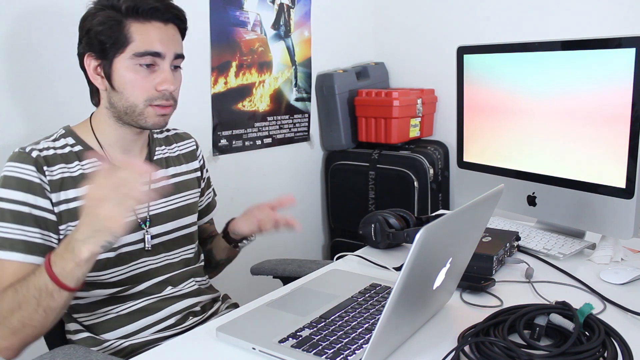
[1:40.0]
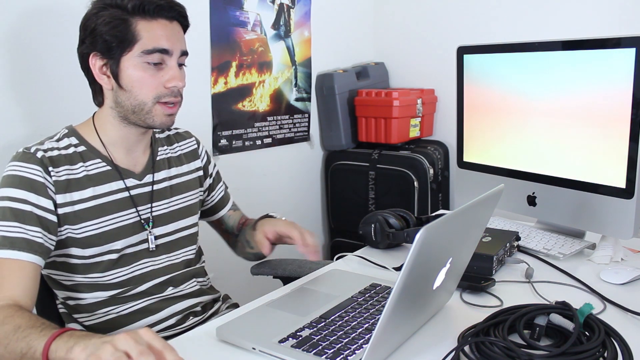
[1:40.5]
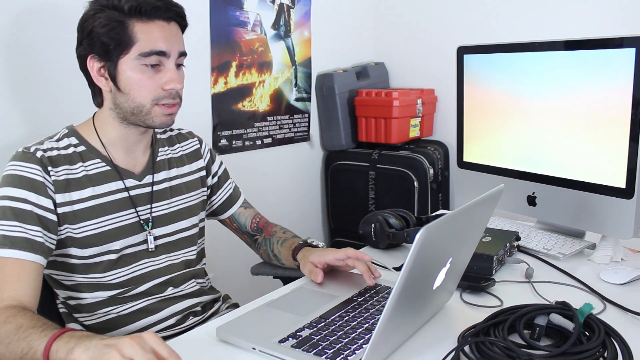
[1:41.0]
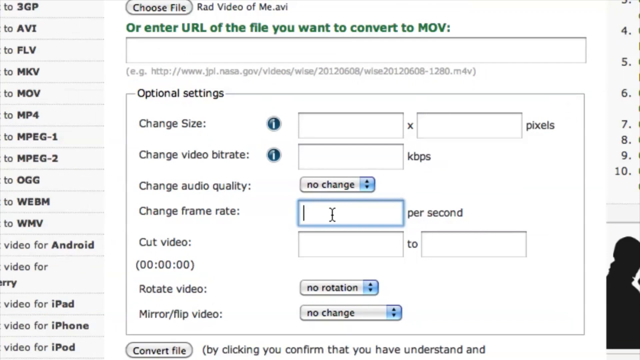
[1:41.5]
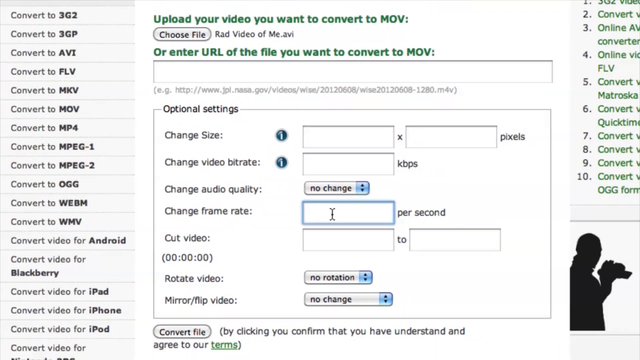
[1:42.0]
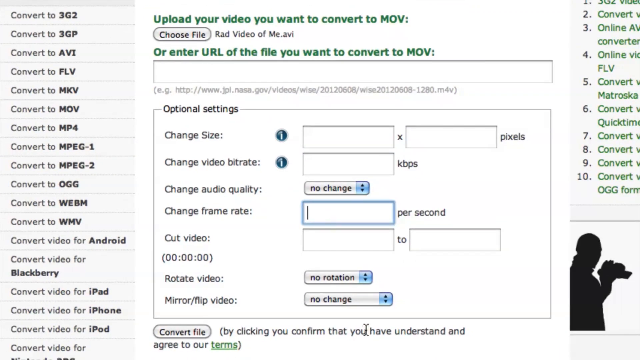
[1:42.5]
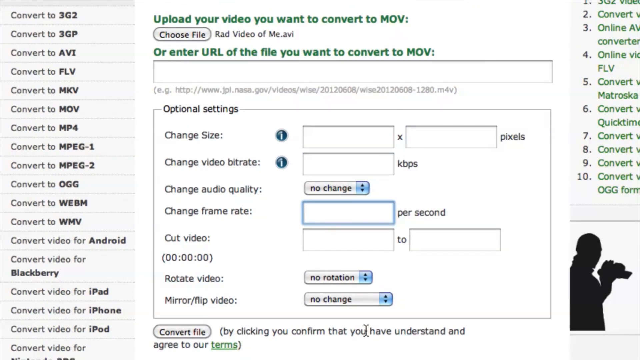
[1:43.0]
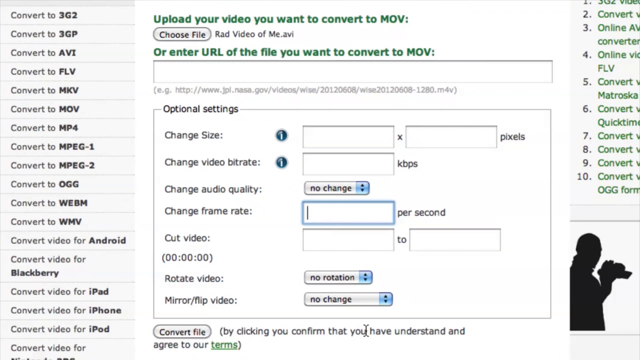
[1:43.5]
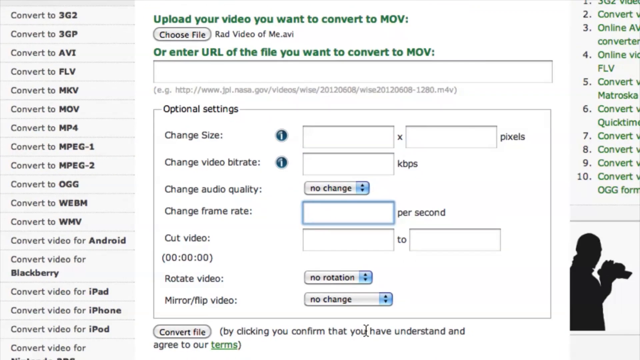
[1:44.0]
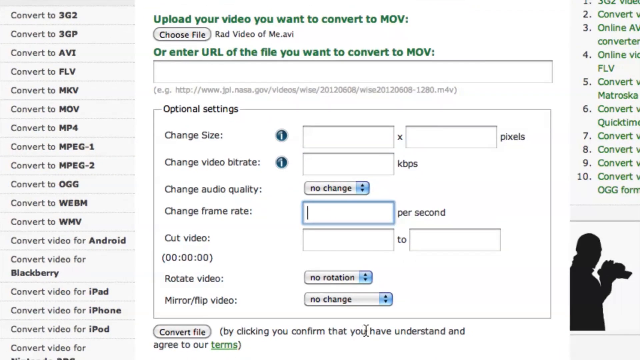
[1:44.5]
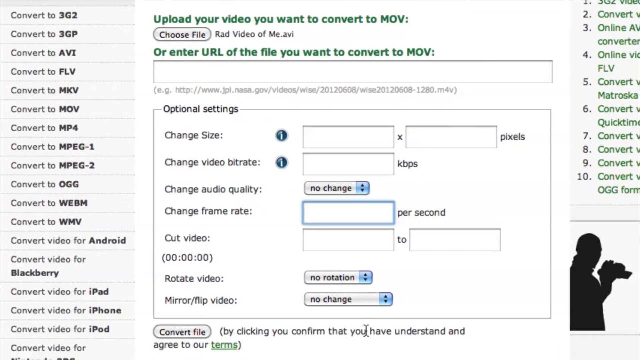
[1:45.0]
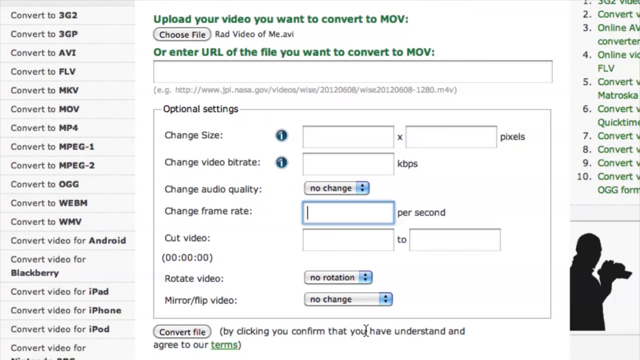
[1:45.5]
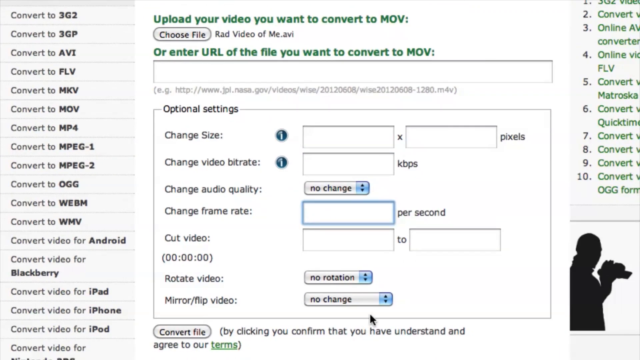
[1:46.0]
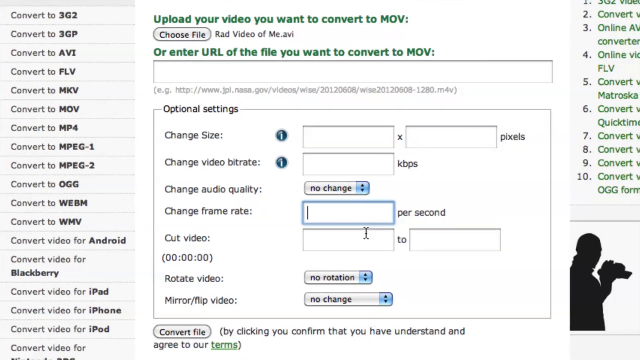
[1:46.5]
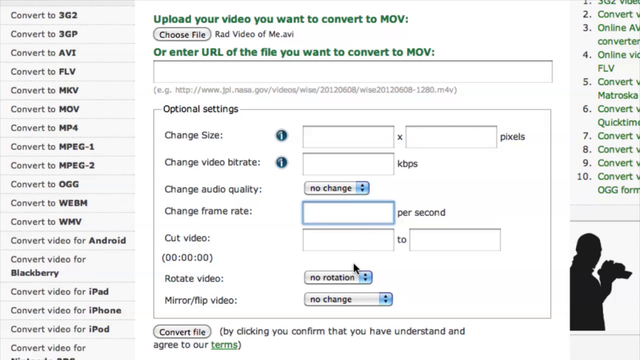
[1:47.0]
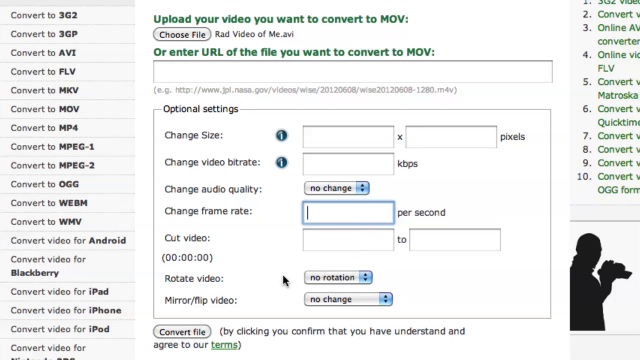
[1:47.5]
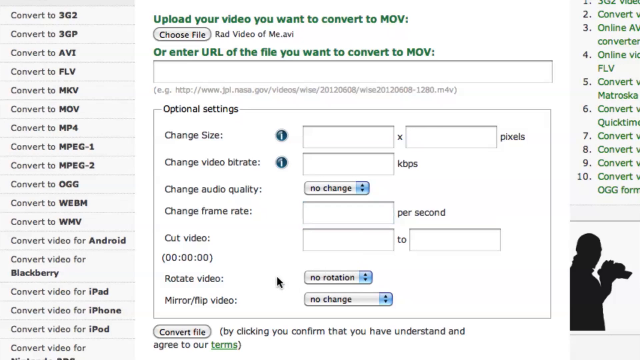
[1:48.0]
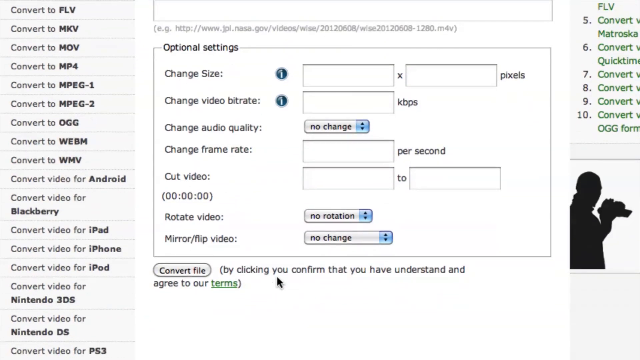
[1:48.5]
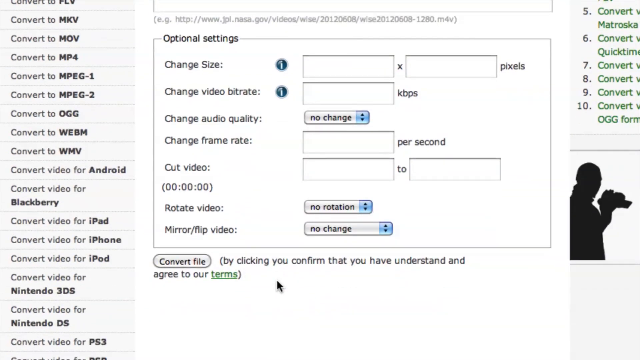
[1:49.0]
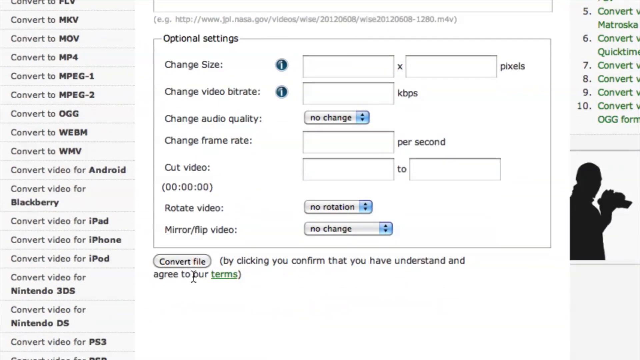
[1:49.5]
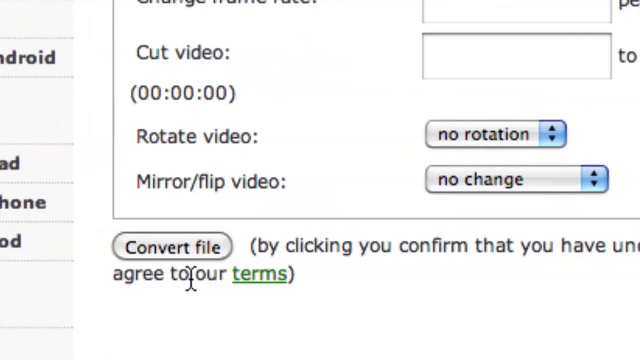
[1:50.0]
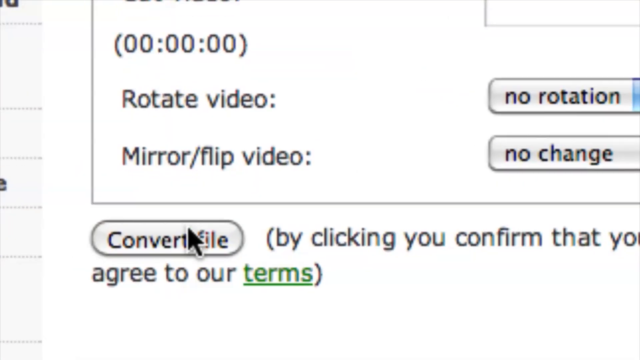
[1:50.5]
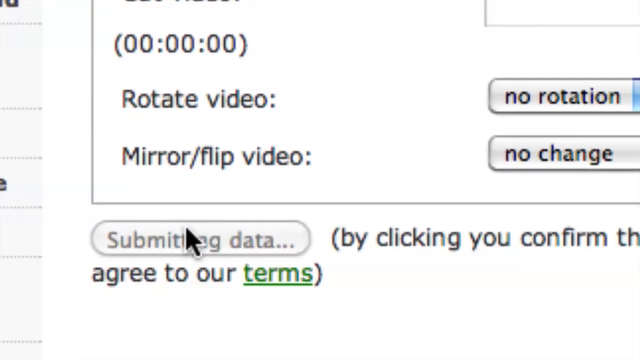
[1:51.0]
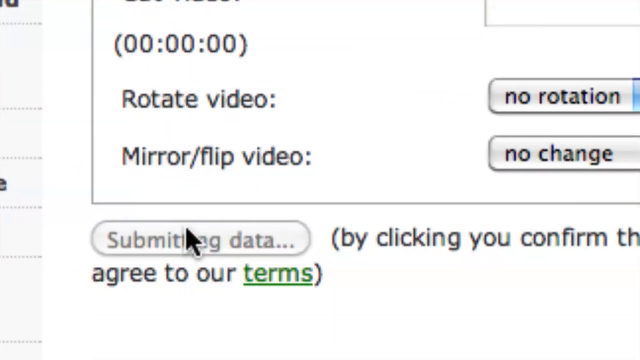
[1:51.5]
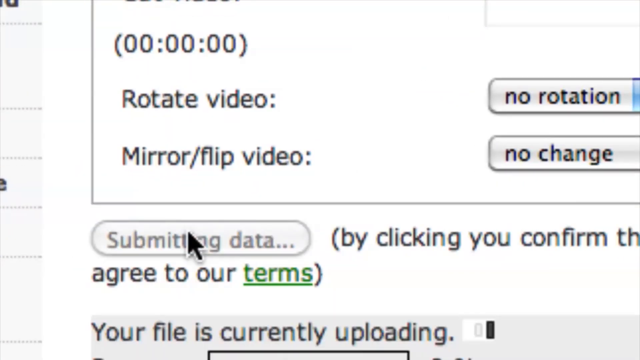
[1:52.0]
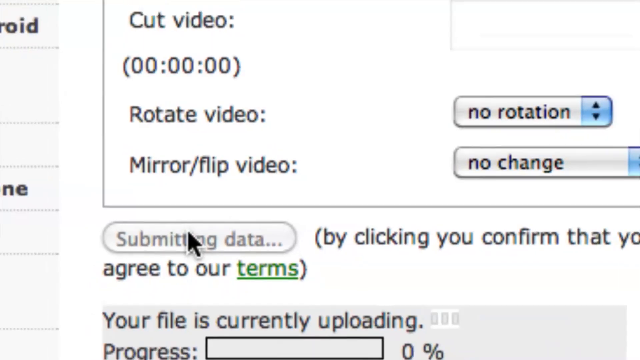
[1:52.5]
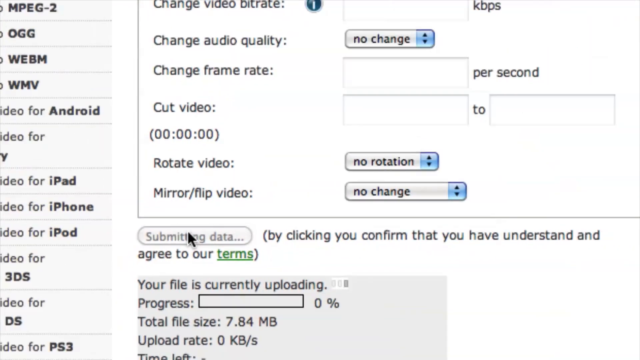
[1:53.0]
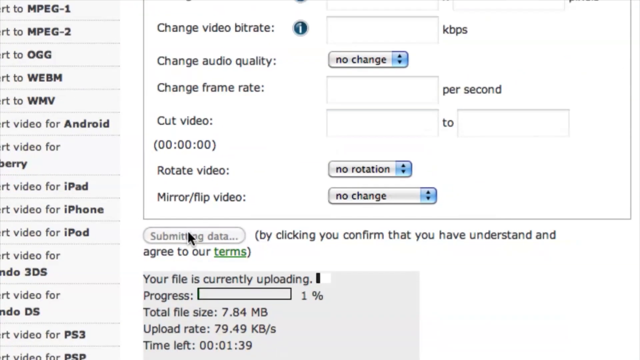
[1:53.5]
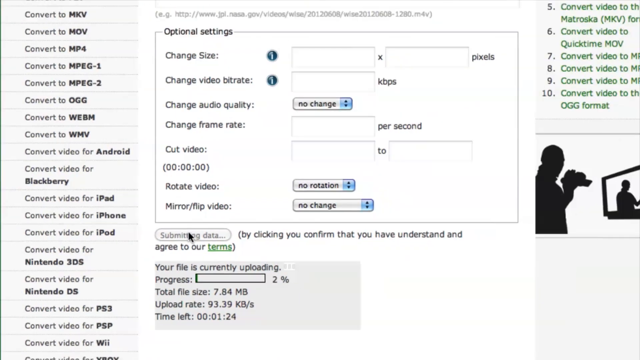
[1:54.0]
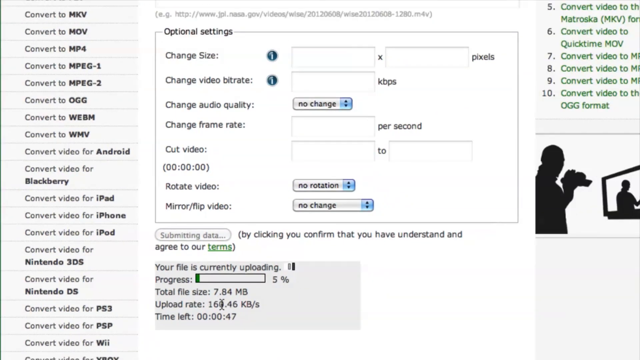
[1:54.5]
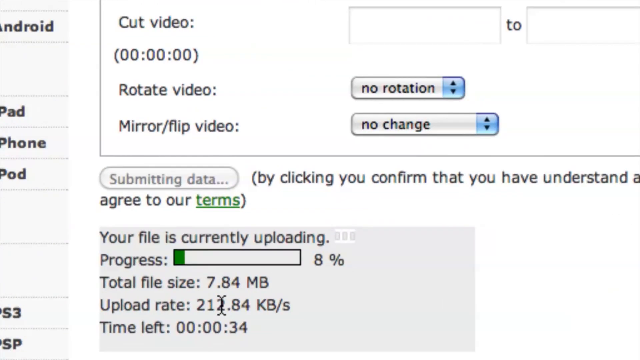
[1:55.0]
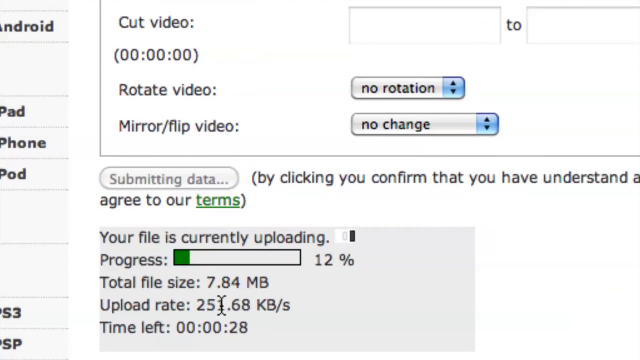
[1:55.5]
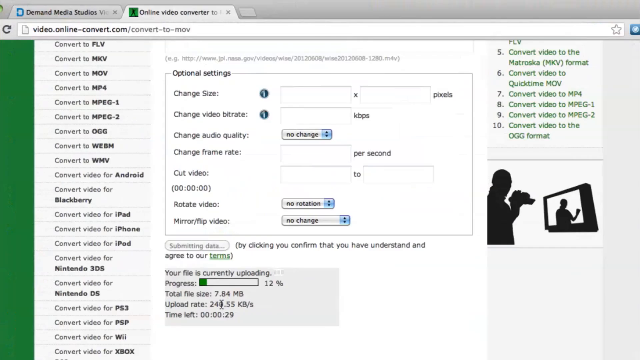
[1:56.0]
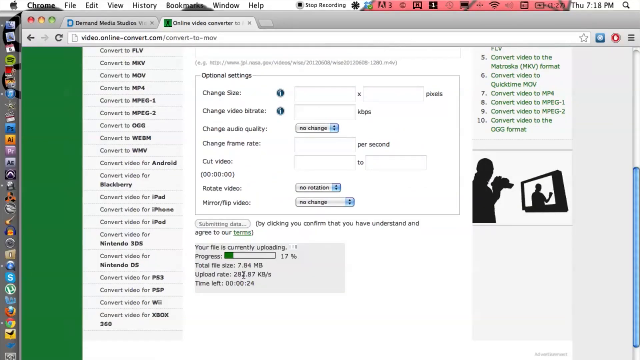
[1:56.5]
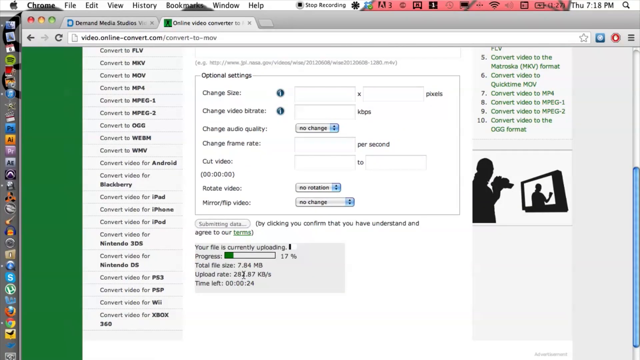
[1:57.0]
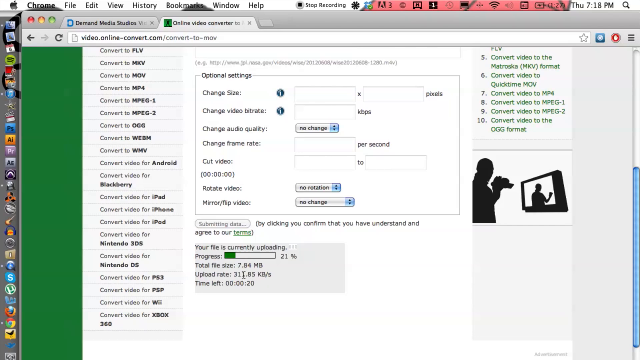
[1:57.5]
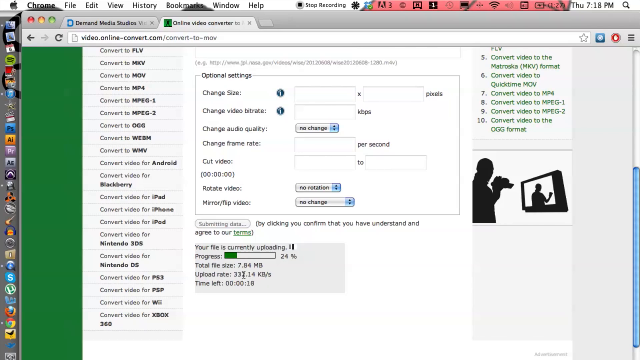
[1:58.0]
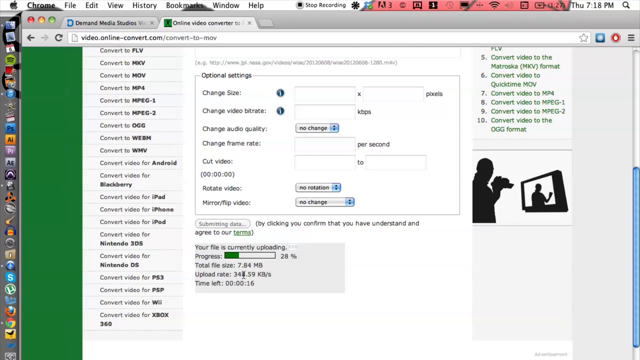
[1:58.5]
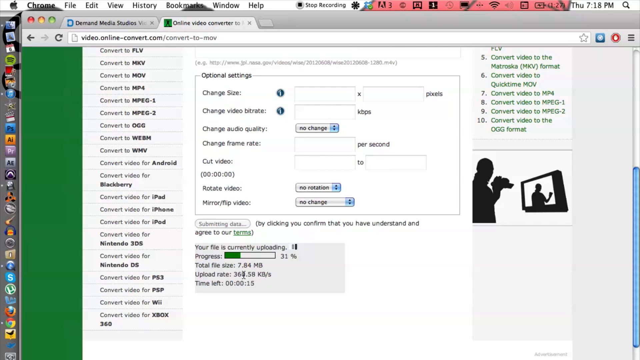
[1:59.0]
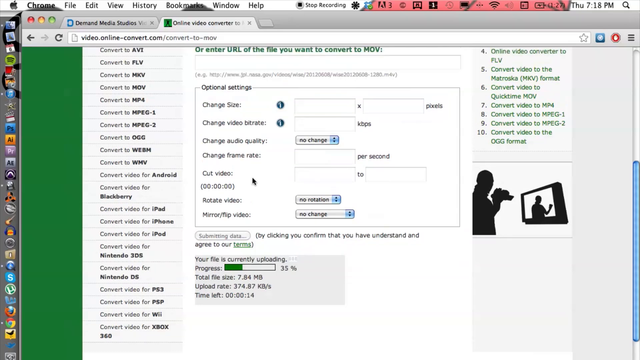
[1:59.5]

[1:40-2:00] On the converter page there is a section reading "Change Framework." He clicks the "Change Framework" button and then the "Submitting Data" button, and a progress bar loads as his file uploads for conversion.